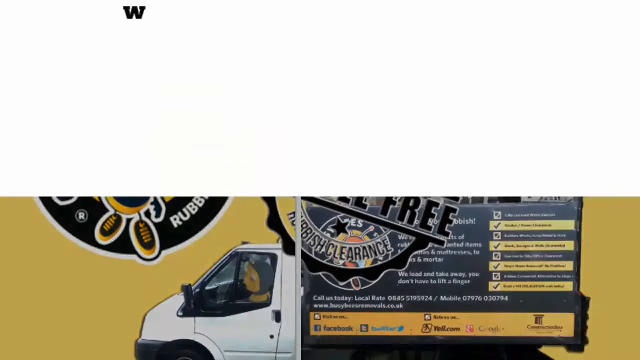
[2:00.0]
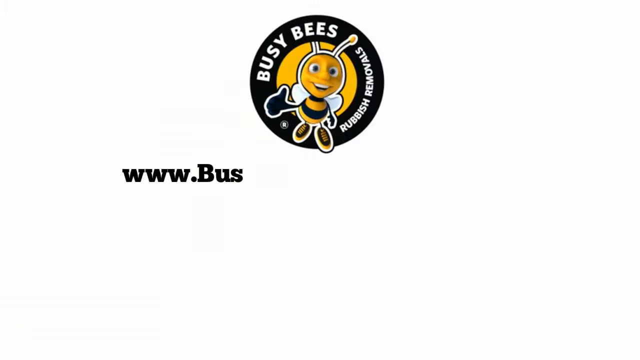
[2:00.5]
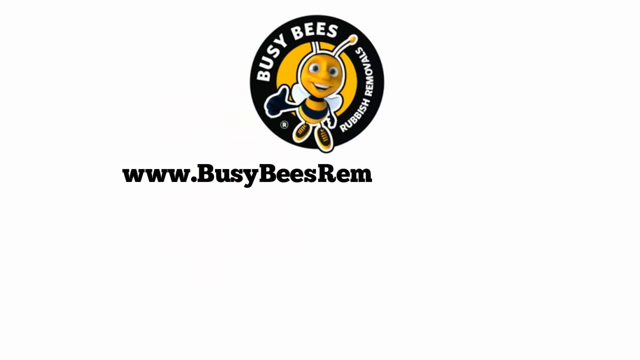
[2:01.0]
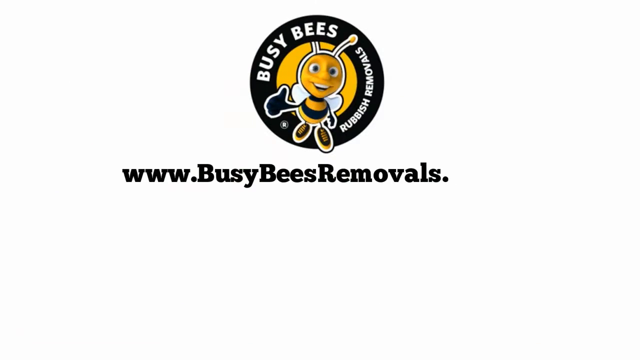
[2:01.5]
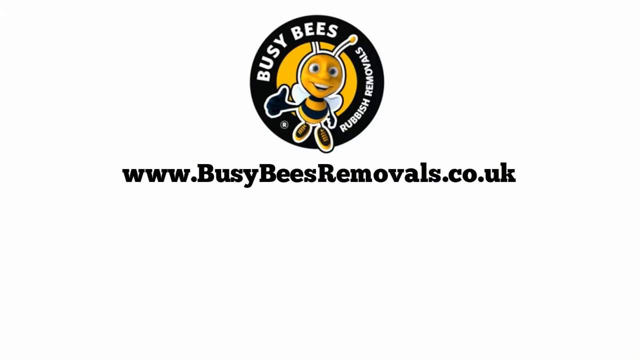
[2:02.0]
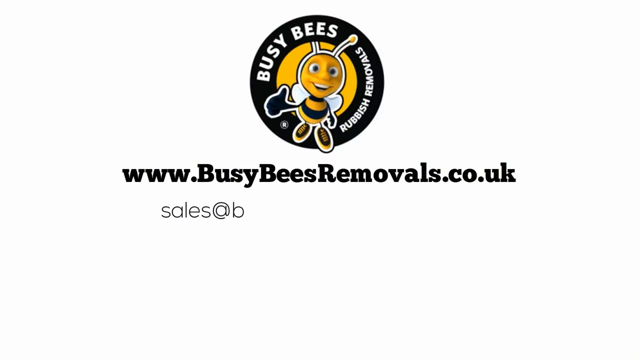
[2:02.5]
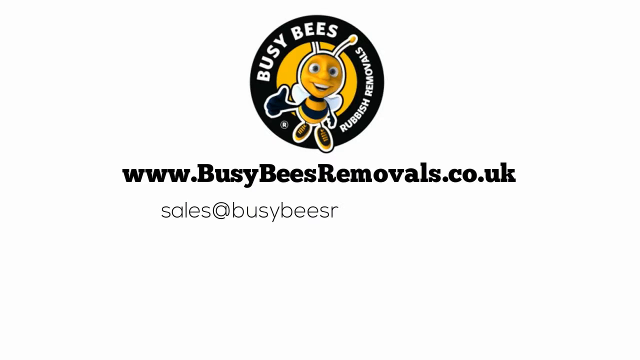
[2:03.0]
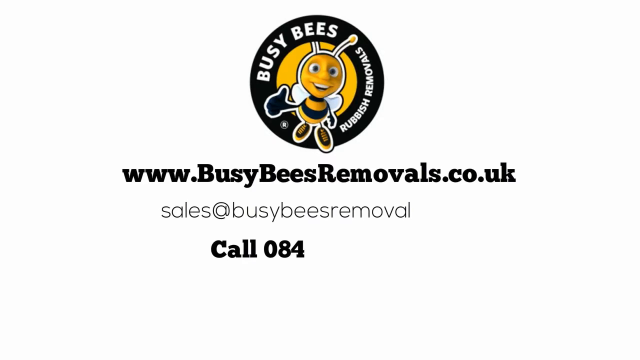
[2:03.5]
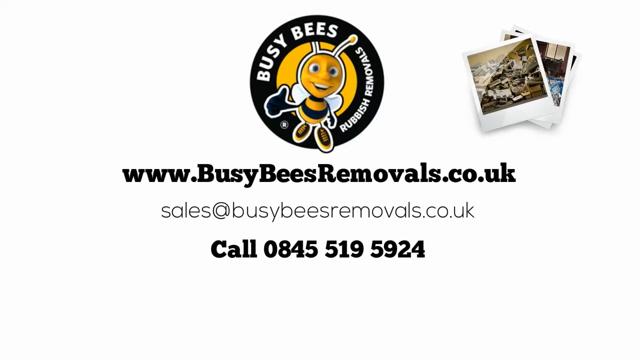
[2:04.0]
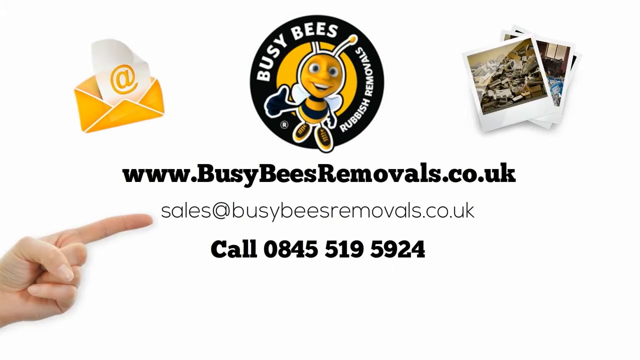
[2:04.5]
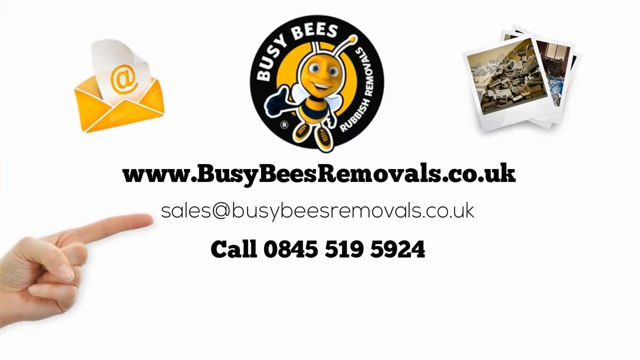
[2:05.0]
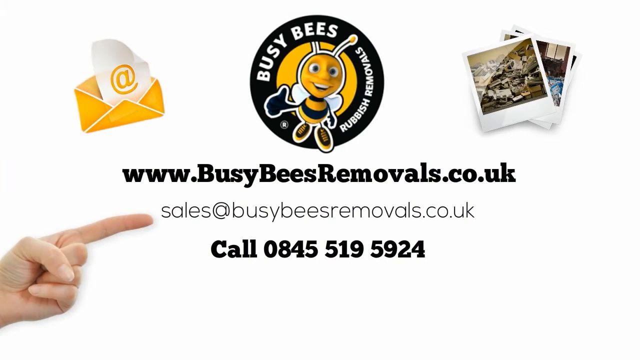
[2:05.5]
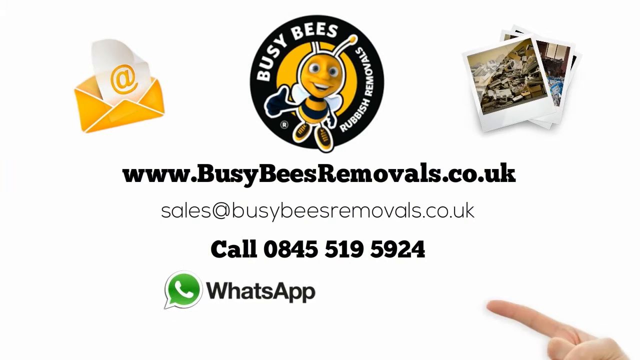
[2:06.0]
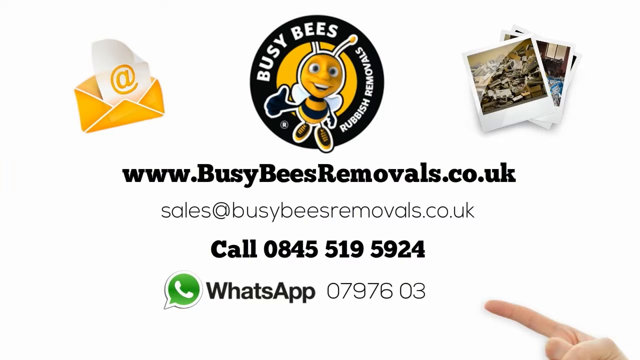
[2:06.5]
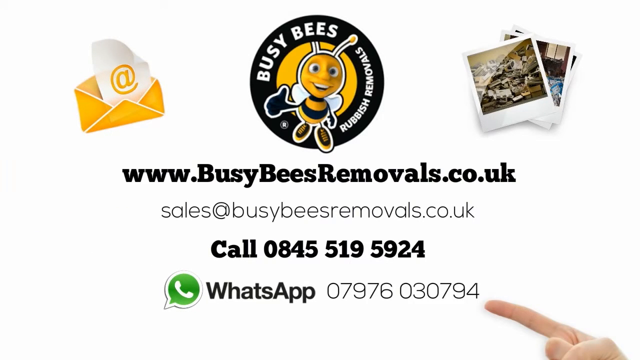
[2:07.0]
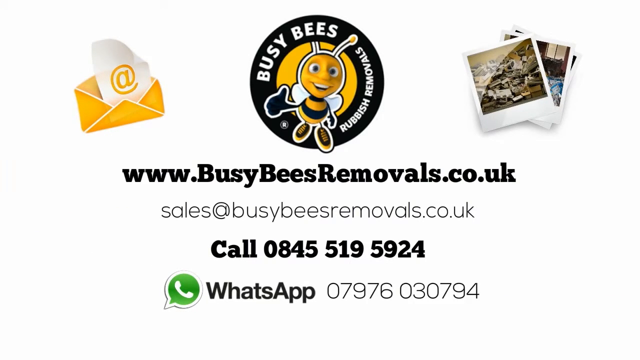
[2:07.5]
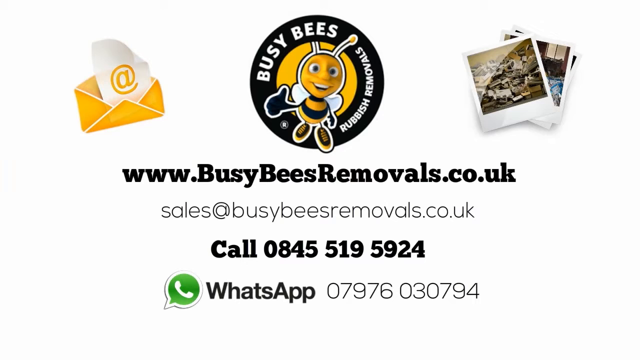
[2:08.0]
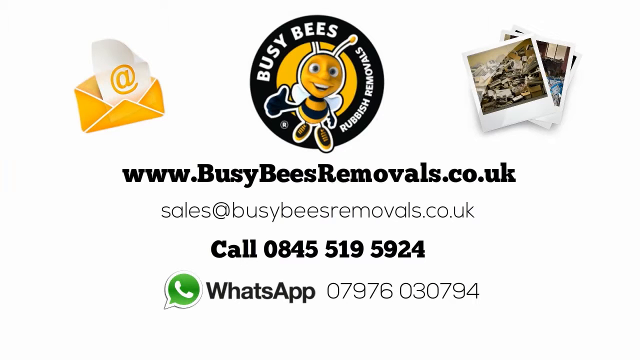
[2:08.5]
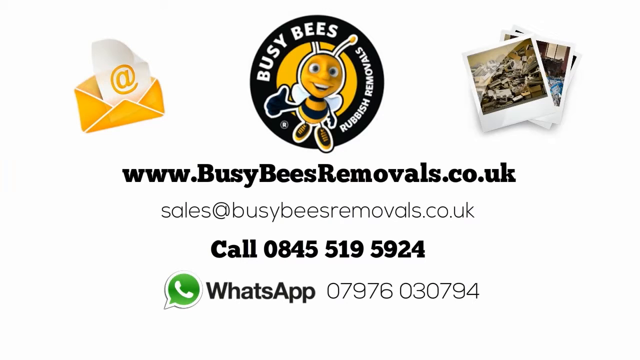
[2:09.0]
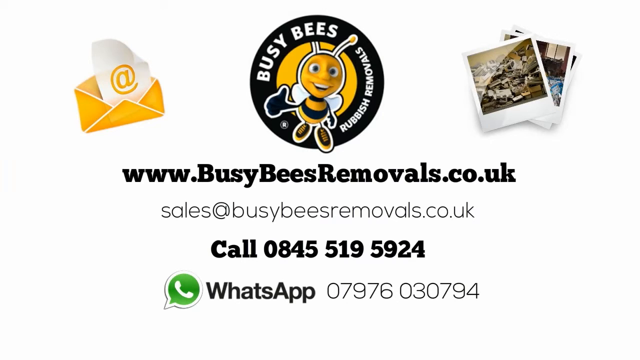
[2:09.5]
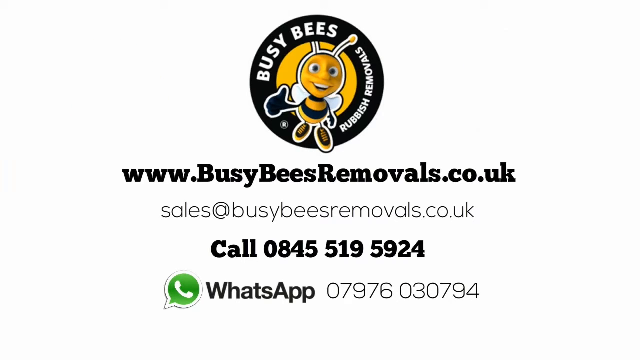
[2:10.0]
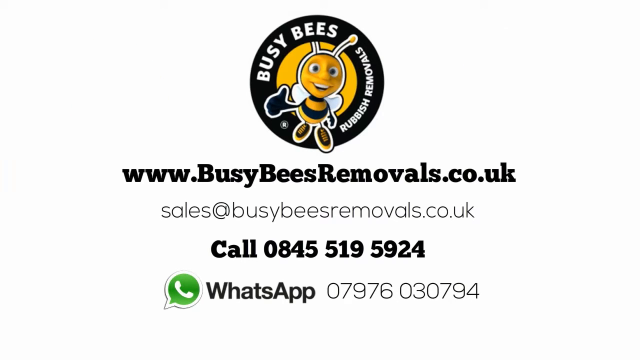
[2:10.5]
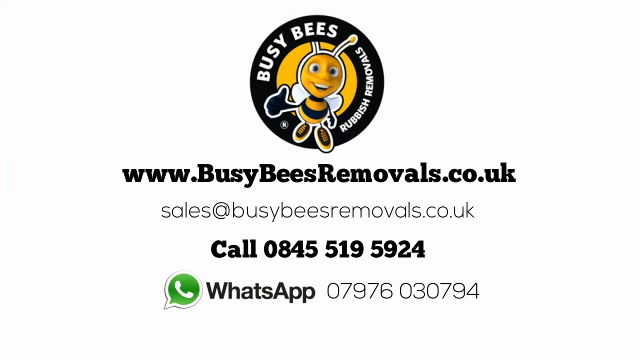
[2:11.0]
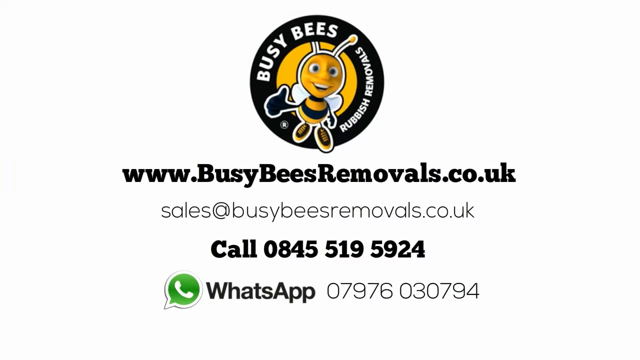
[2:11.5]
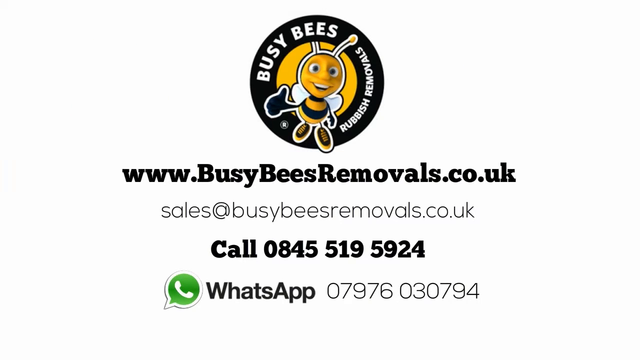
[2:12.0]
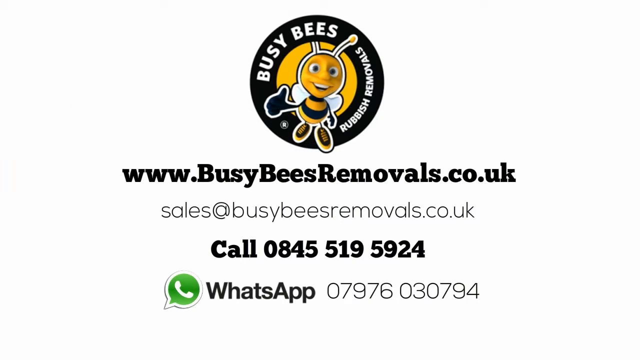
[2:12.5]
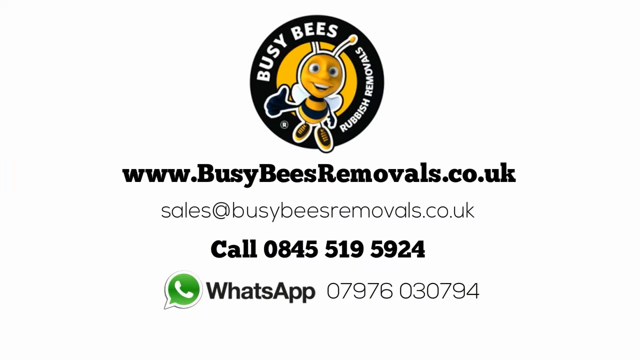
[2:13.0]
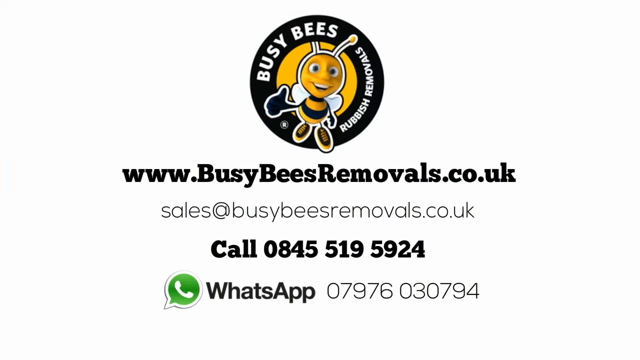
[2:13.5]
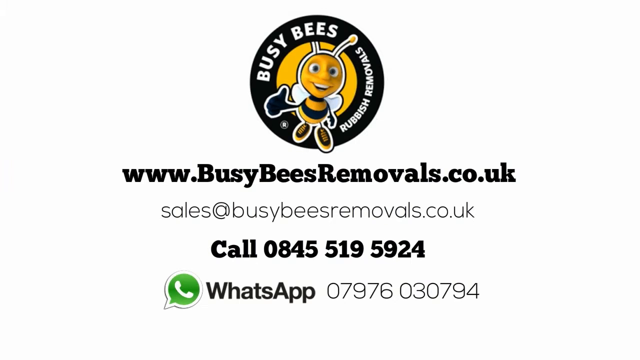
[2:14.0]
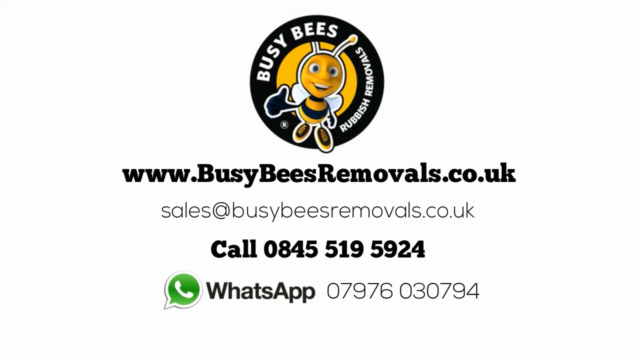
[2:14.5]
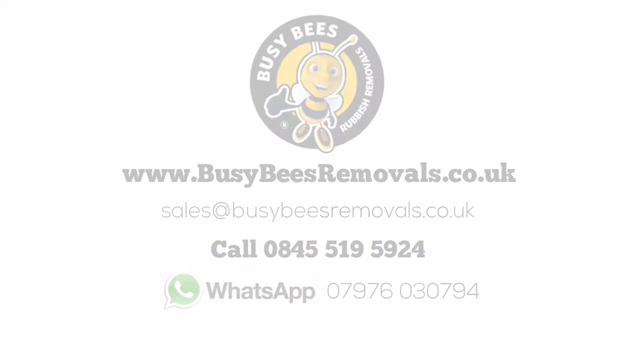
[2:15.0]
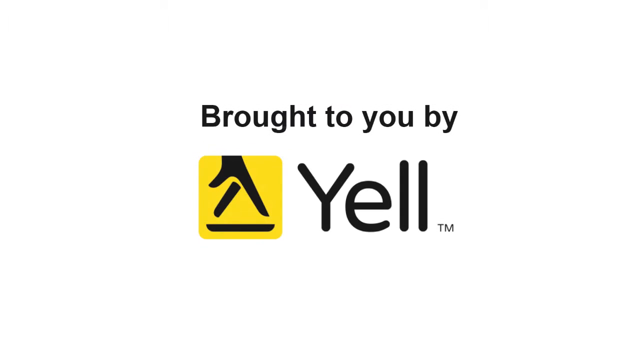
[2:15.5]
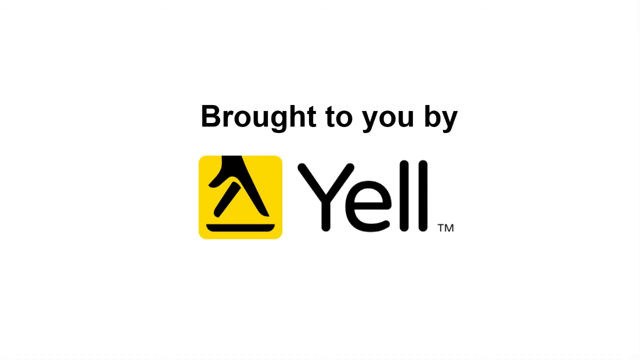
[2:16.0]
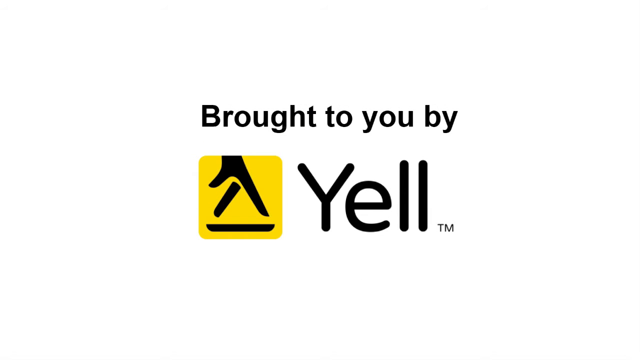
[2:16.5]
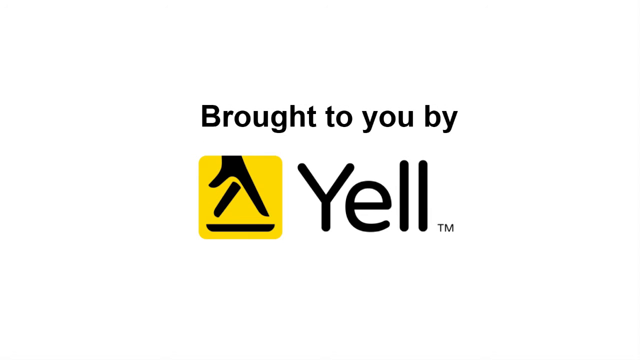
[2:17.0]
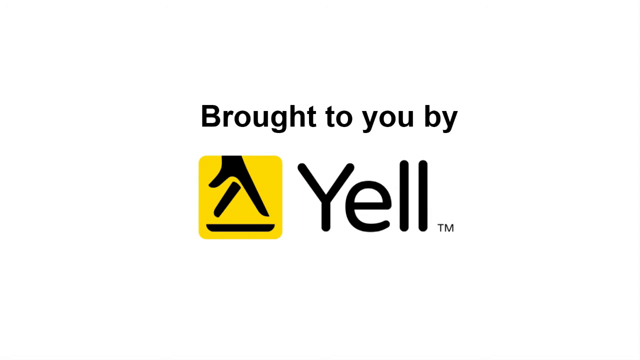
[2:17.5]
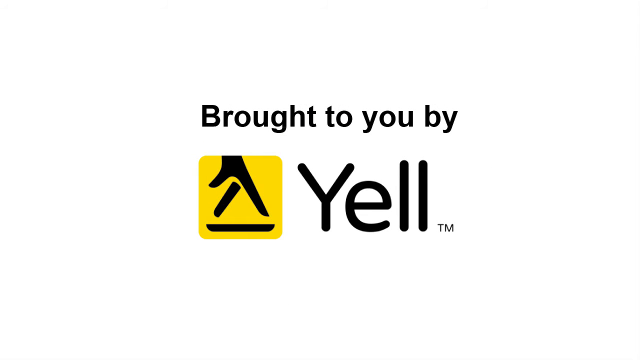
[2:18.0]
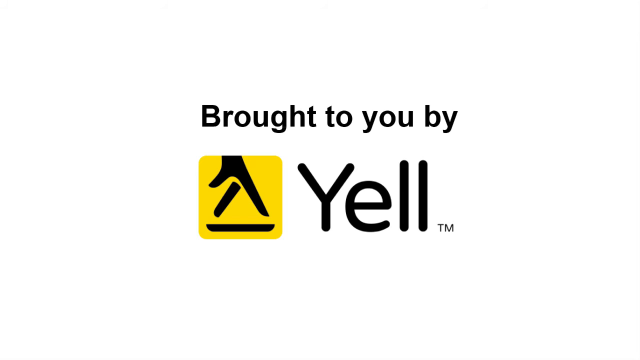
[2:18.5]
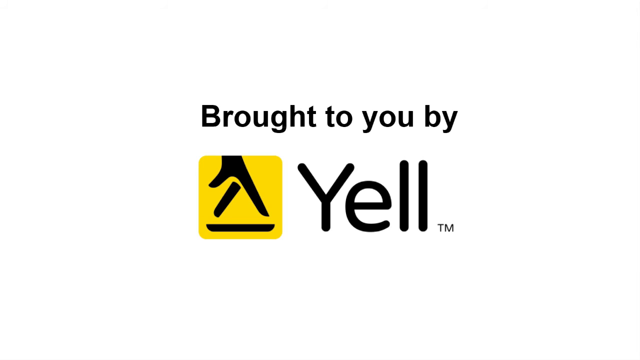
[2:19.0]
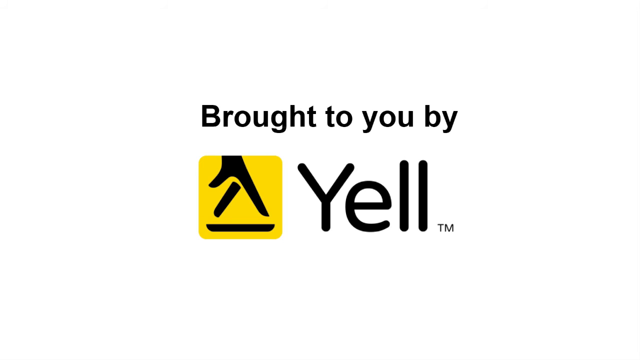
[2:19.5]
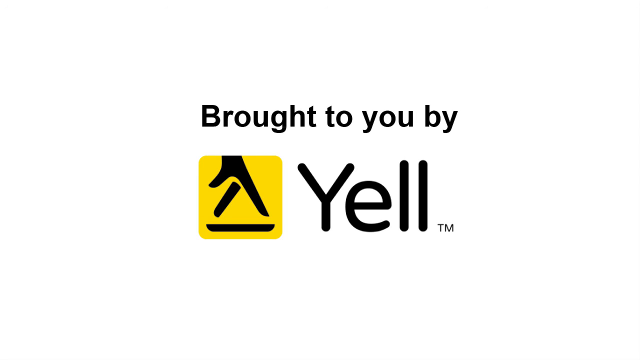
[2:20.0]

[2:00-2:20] The scene changes to the Busy Bees Rubbish Removals logo at the top, with a cartoon bee in the center. Below the logo is the website "www.busybeesremoval.co.uk," and underneath it is the email address sales at busybeesremoval.co.uk. Under the email address is the phone number: "call 0845 519 5924." A hand from the bottom left corner points toward the email address, and a WhatsApp number, 07976 030794, is shown at the bottom. The background is all white. Text then reads "brought to you by Yell," with a yellow and black logo on the left that looks similar to the Yellow Book phone book symbol: a hand-shaped image with a horizontal black line underneath it.